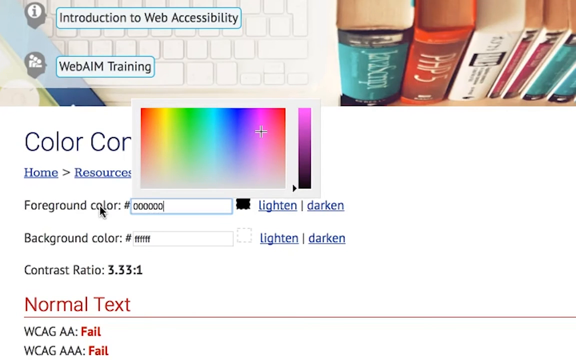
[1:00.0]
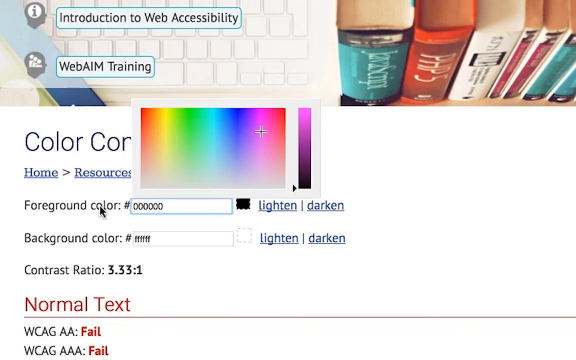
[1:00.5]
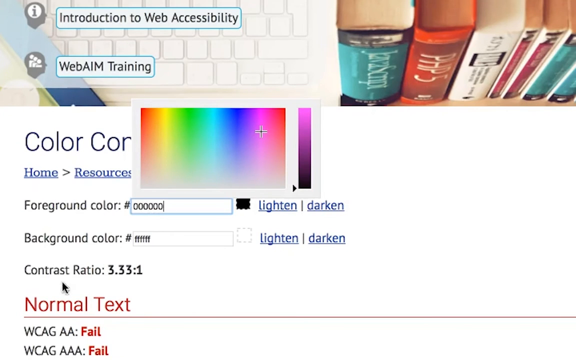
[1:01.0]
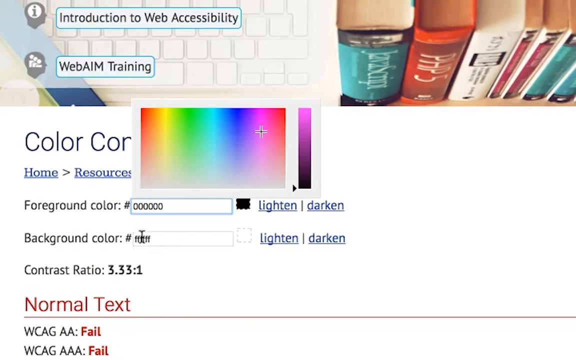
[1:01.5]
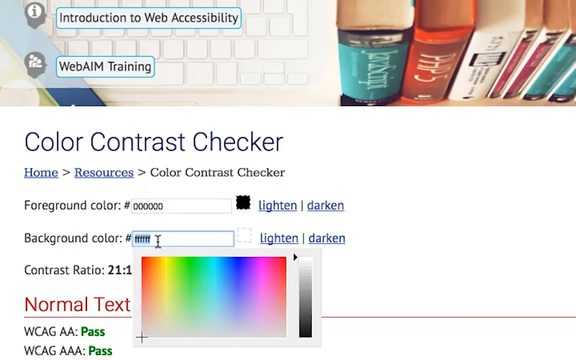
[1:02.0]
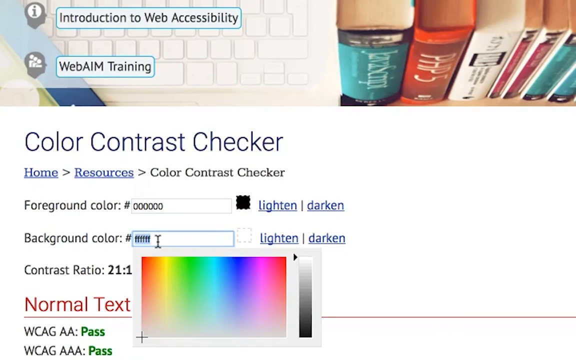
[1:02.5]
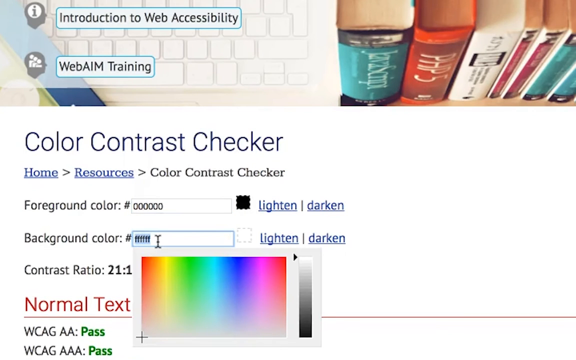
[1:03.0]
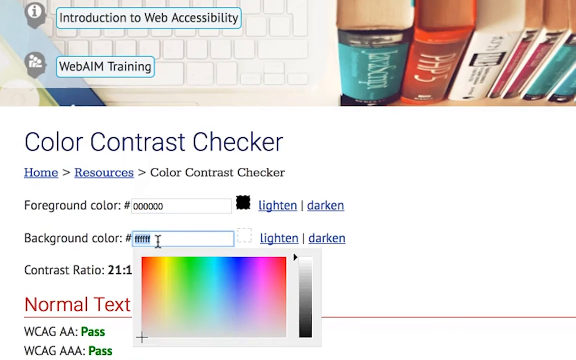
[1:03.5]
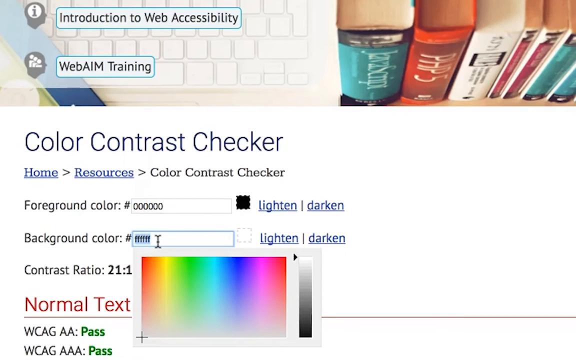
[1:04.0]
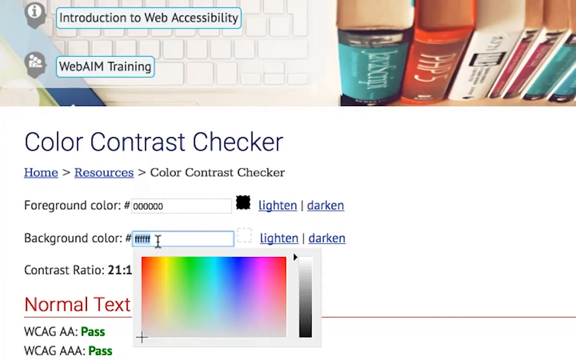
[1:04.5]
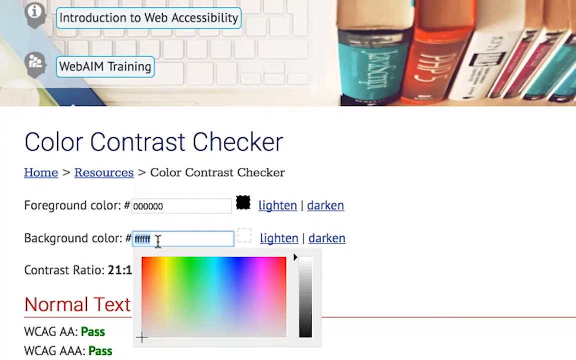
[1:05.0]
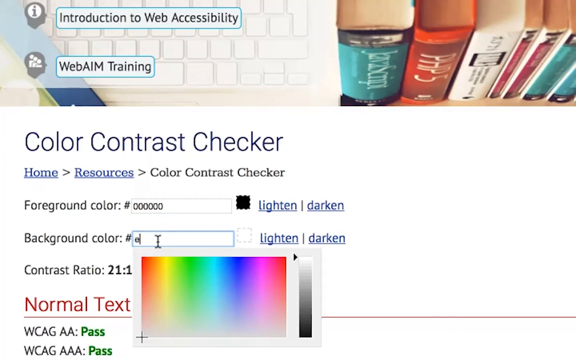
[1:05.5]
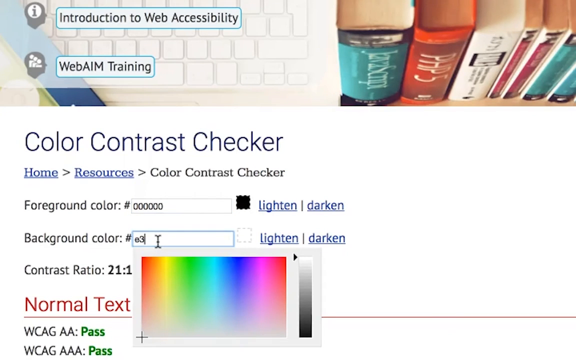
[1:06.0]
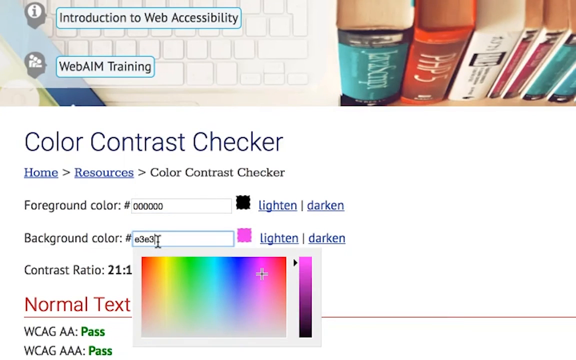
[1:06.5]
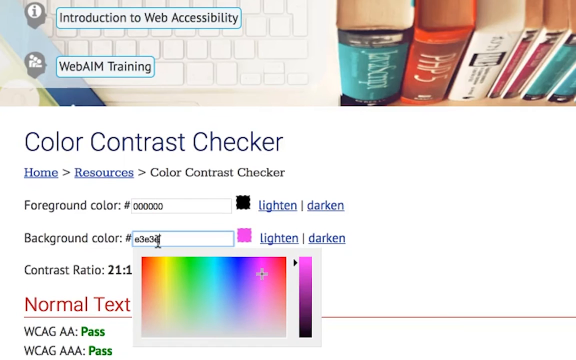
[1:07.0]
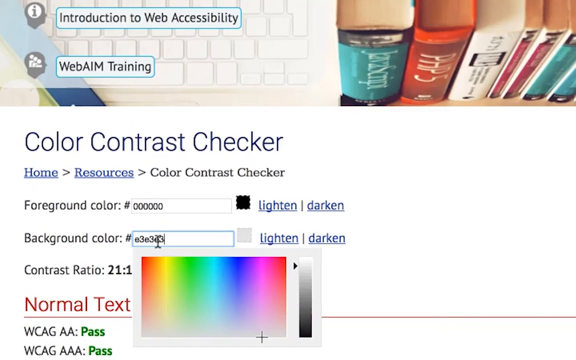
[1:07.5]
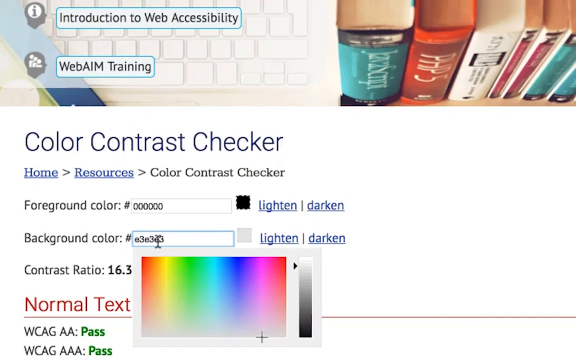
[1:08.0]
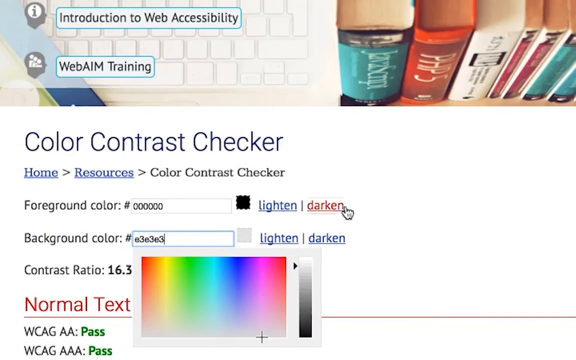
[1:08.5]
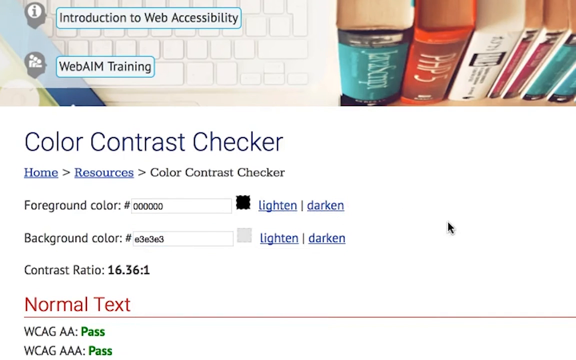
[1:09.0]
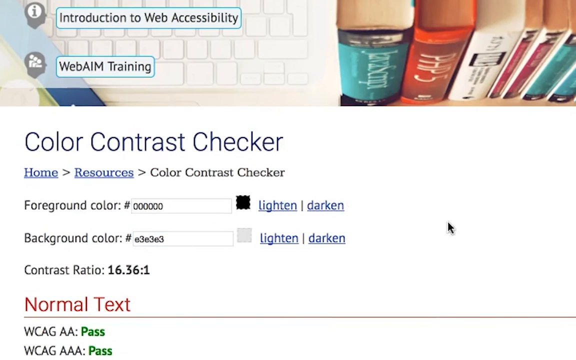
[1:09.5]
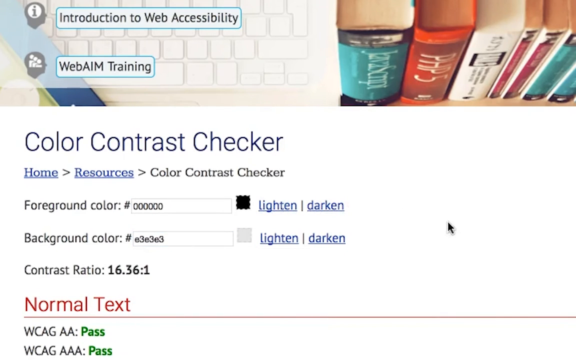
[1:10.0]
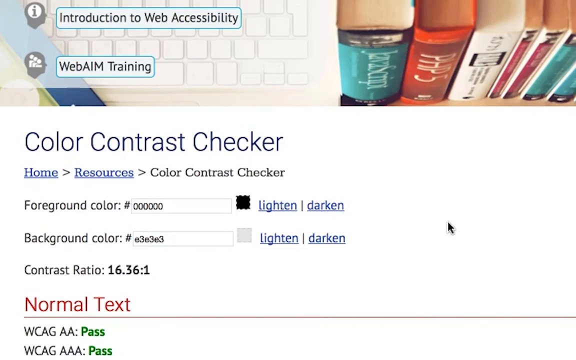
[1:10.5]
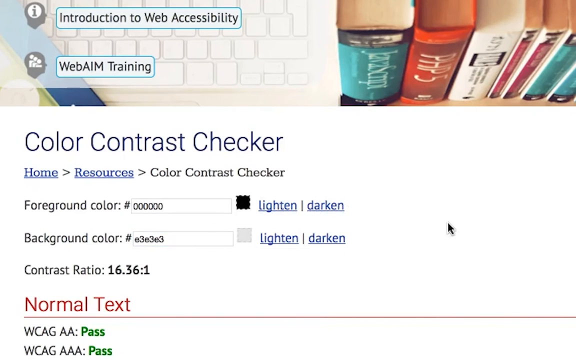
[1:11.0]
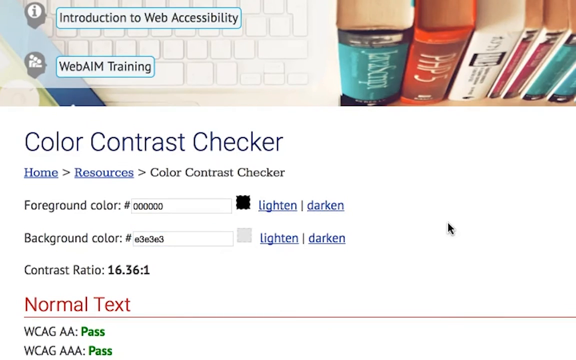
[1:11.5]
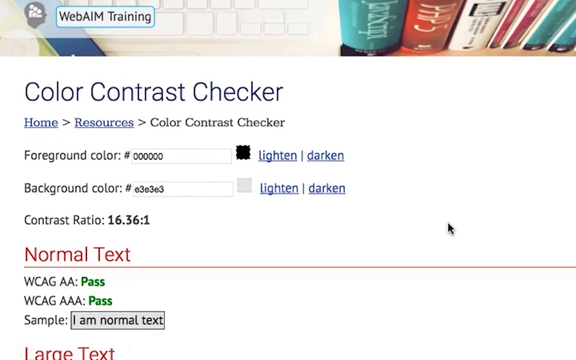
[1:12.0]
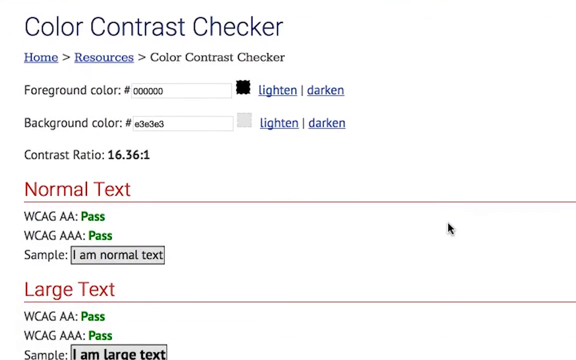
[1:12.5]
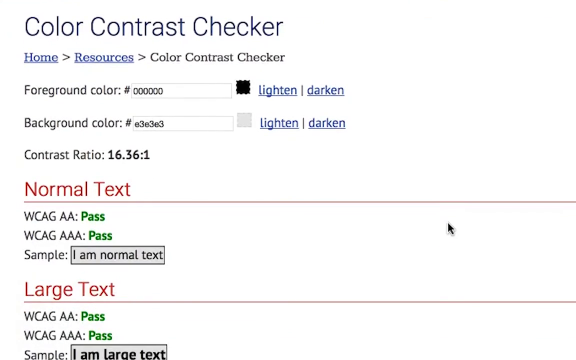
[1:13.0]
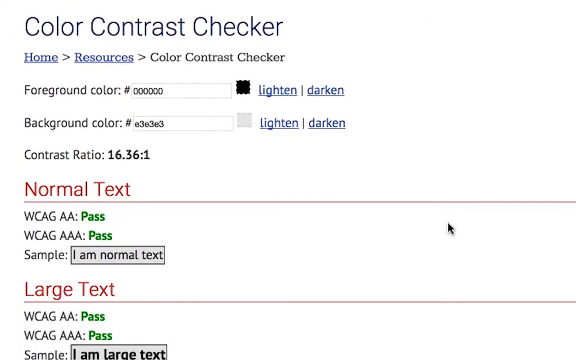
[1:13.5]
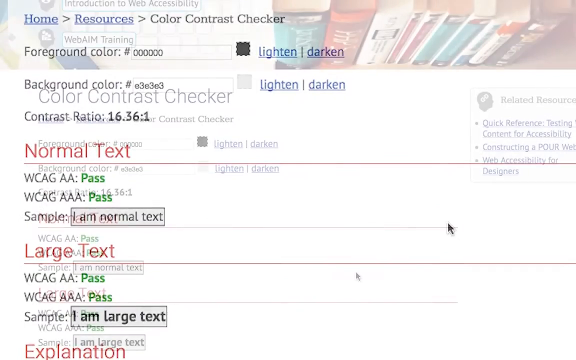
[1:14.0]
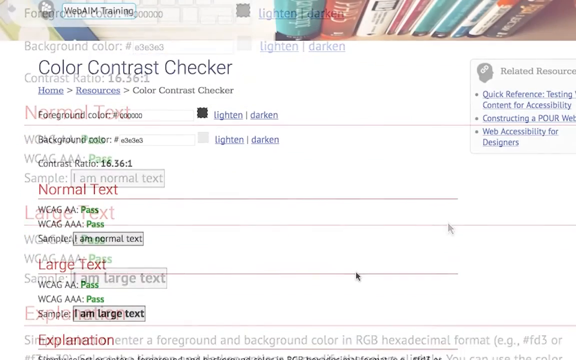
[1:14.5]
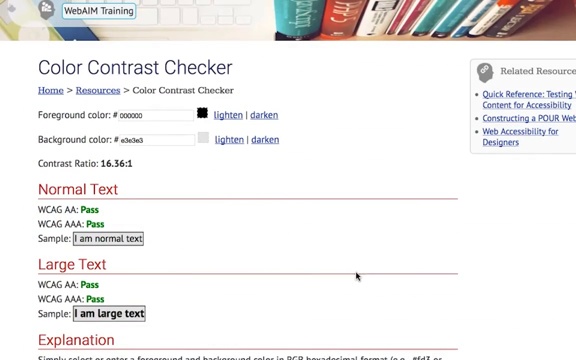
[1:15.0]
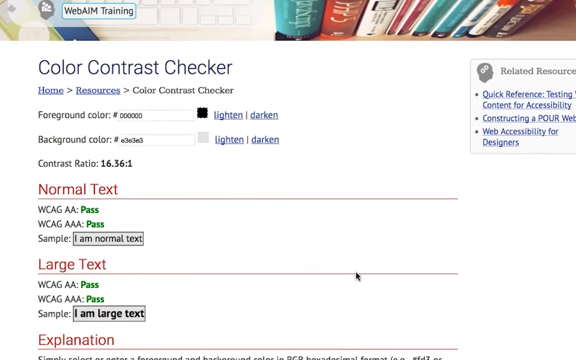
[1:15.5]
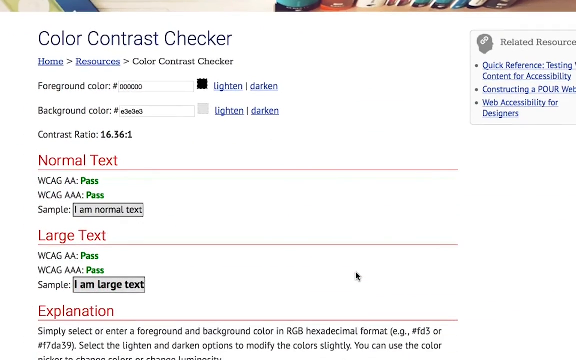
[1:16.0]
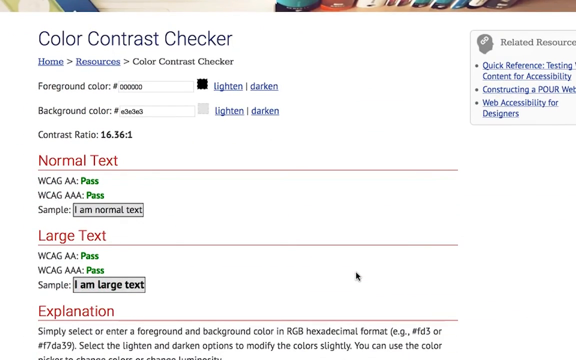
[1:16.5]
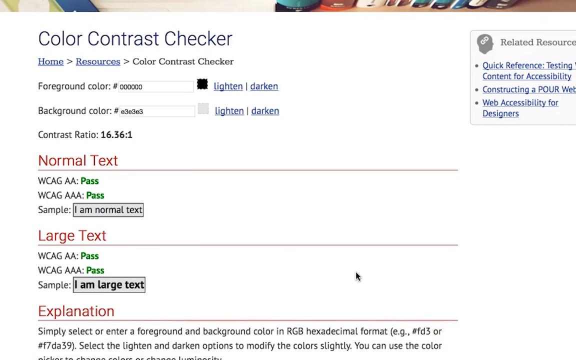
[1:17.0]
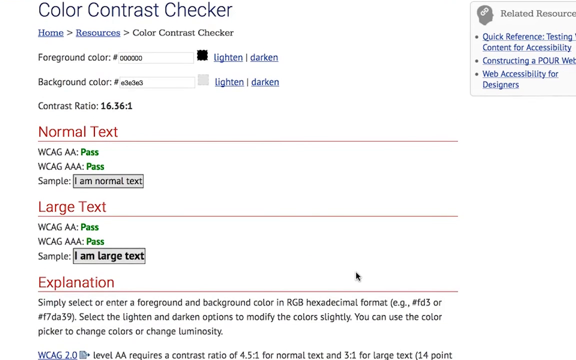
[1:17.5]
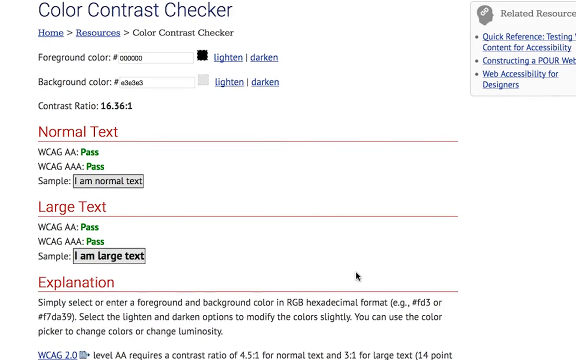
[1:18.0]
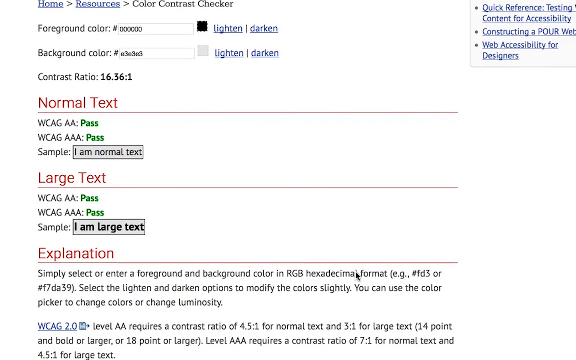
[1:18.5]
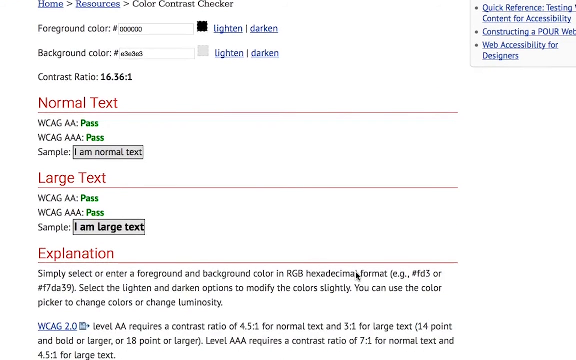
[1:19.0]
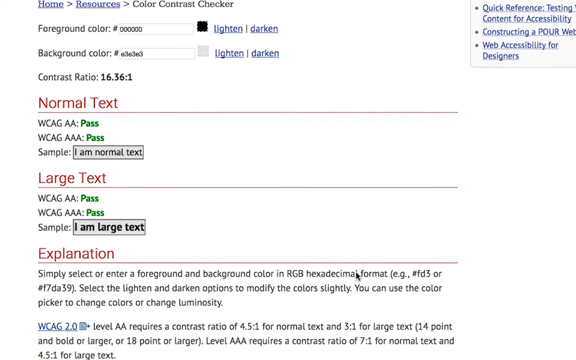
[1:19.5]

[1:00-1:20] A close-up of the WebAIM web page shows the Color Contrast Checker section, with boxes for foreground color, background color, and contrast ratio, selections to lighten or darken each, and boxes to enter a number for each. There is also a rainbow bar to choose colors from. The cursor is in the background color box, and a six-character number is entered. The page then scrolls up to red text that reads "normal text" and "large text," and below that, also in red, "explanation."